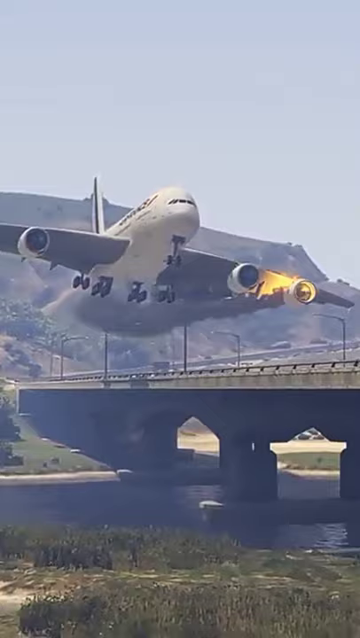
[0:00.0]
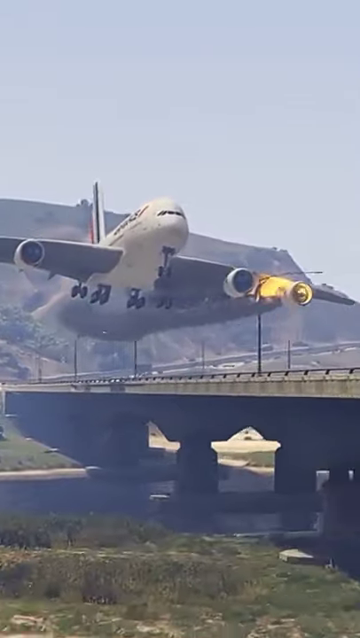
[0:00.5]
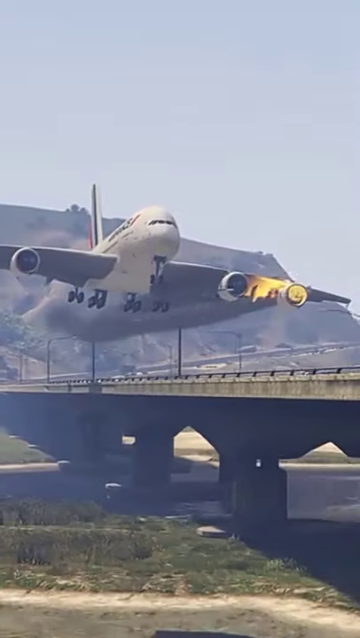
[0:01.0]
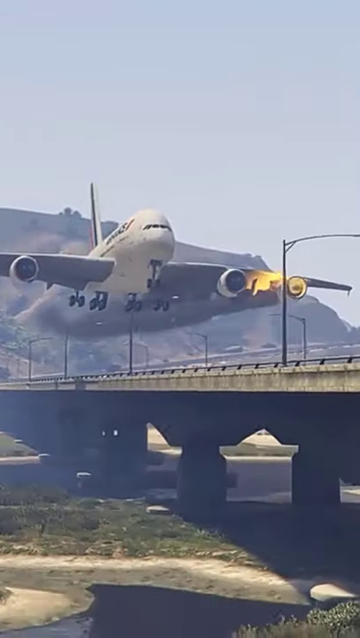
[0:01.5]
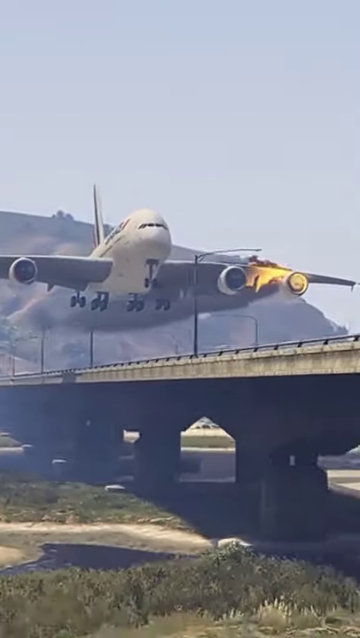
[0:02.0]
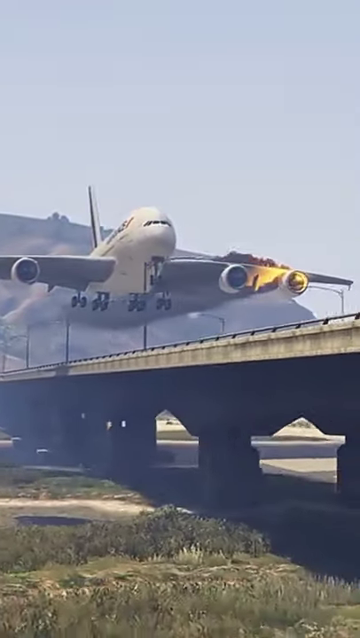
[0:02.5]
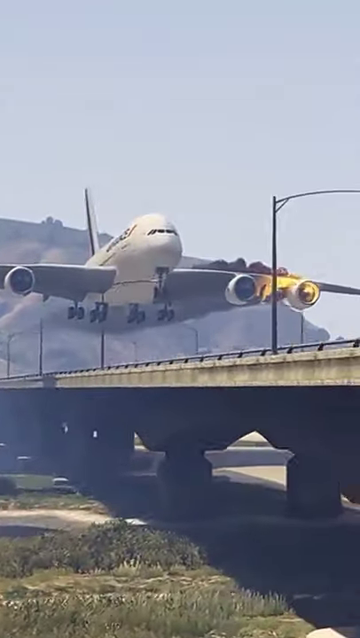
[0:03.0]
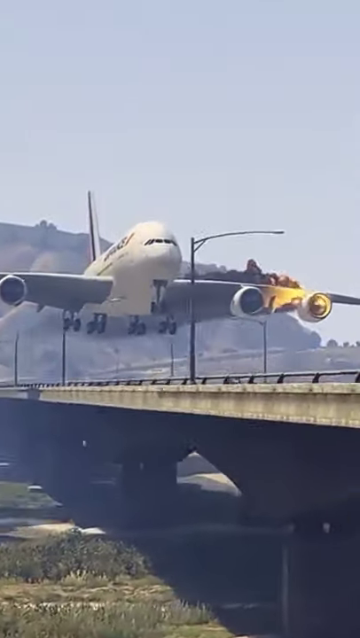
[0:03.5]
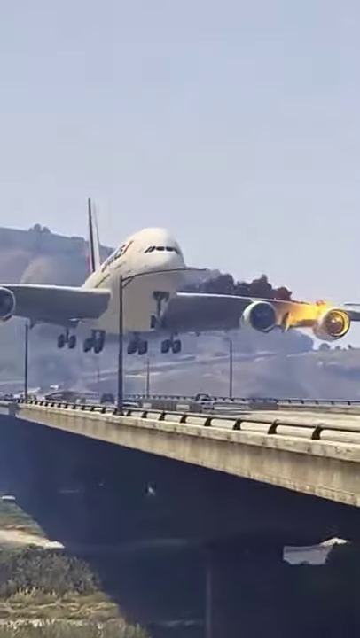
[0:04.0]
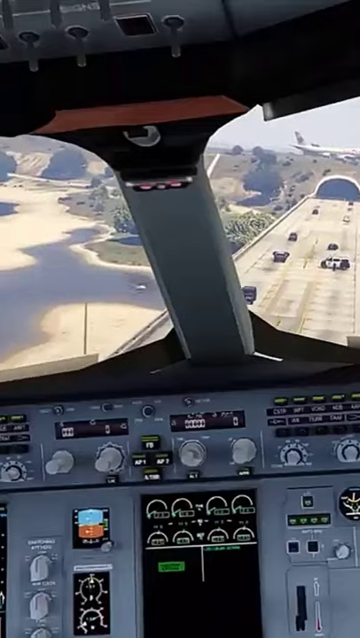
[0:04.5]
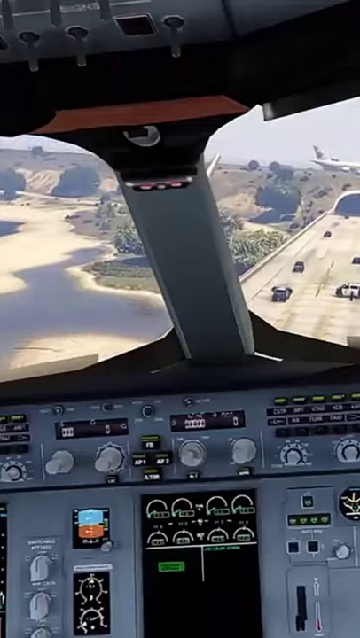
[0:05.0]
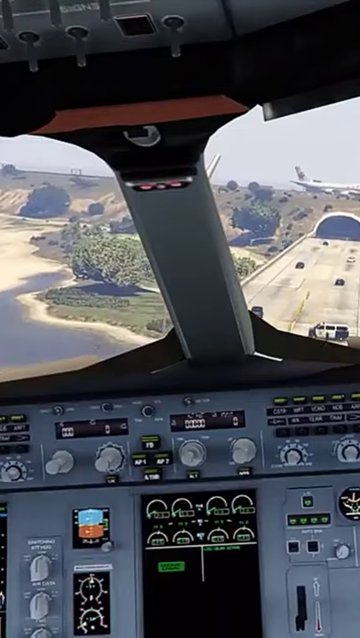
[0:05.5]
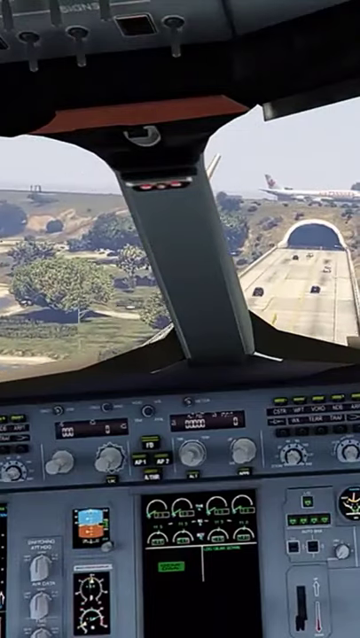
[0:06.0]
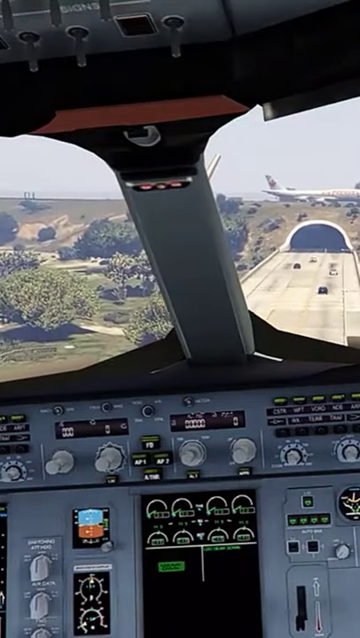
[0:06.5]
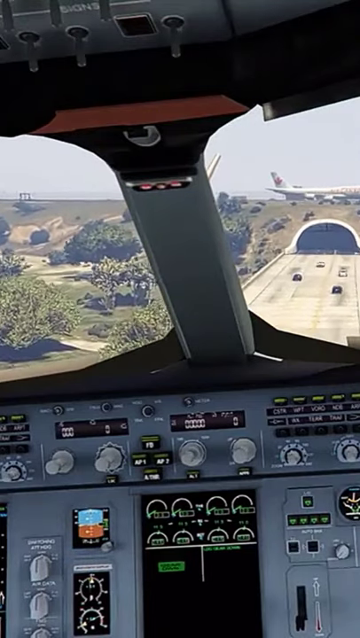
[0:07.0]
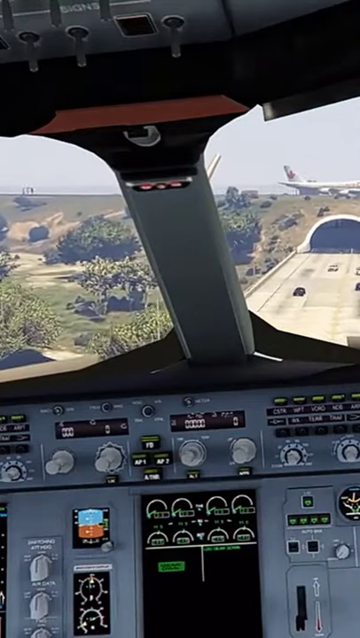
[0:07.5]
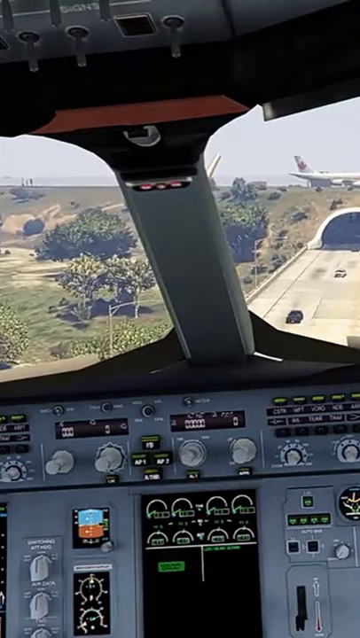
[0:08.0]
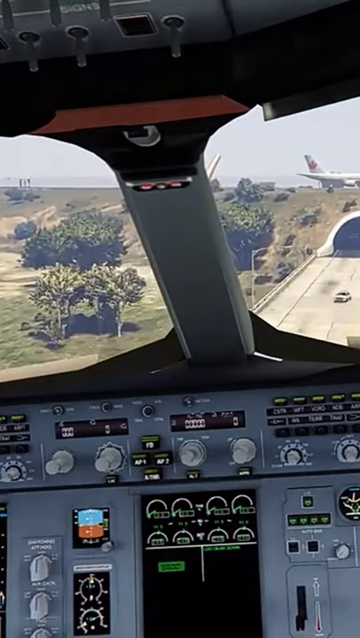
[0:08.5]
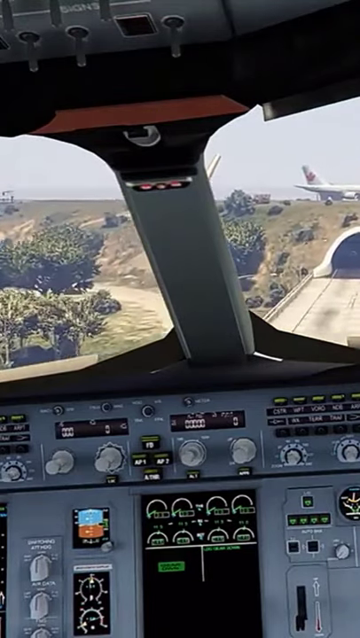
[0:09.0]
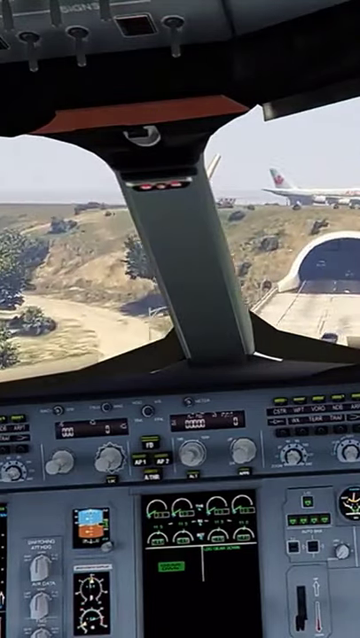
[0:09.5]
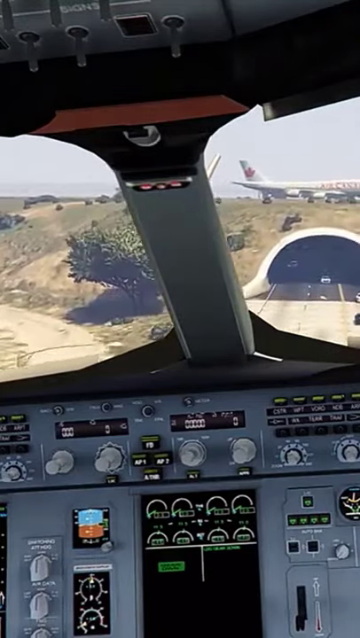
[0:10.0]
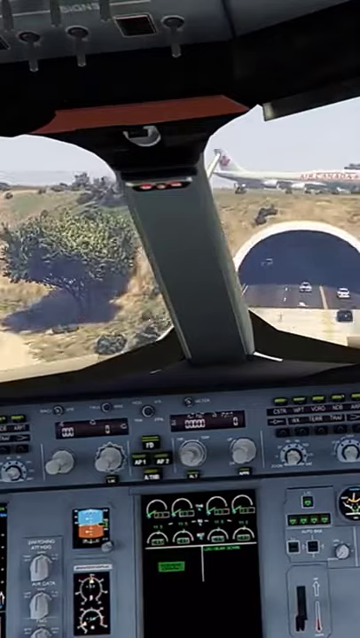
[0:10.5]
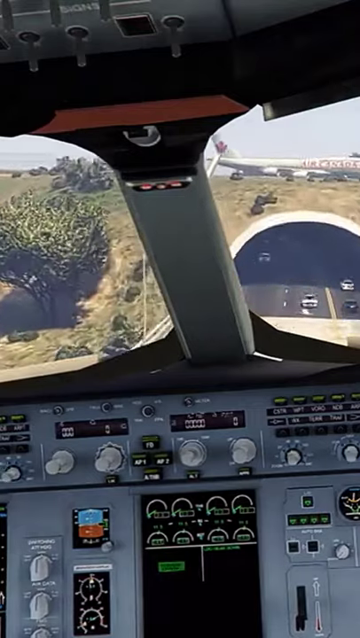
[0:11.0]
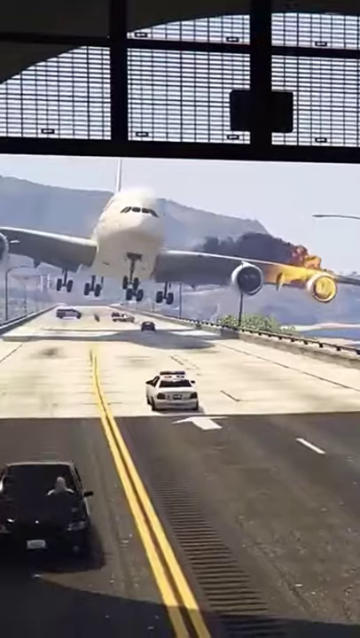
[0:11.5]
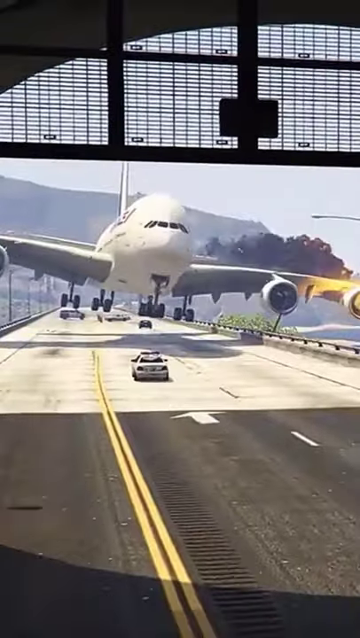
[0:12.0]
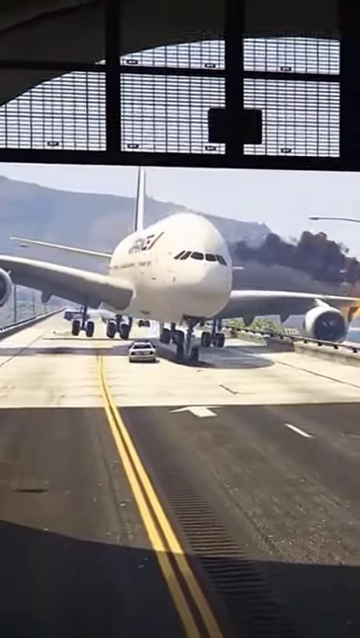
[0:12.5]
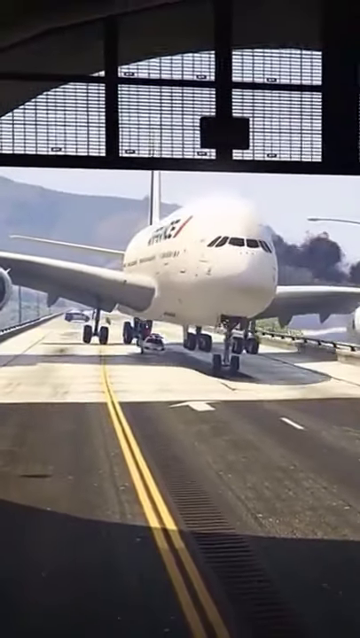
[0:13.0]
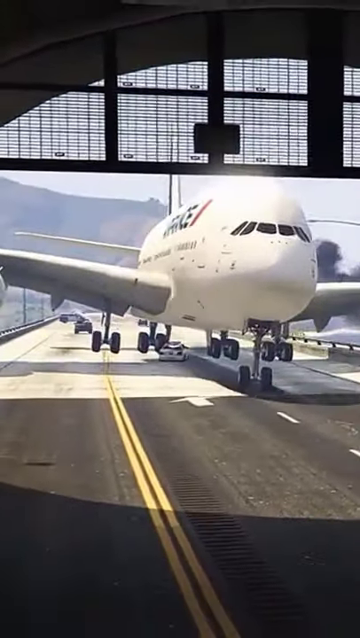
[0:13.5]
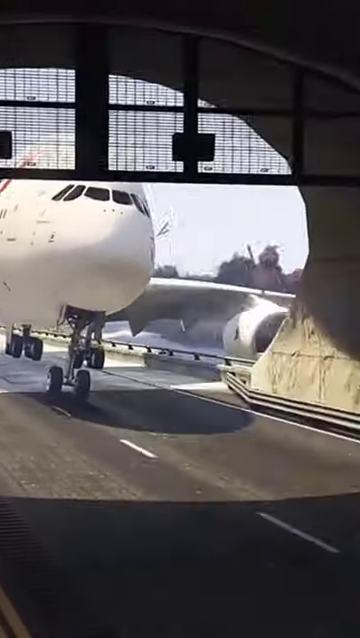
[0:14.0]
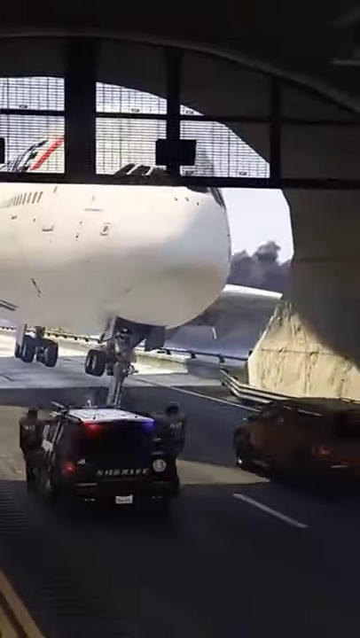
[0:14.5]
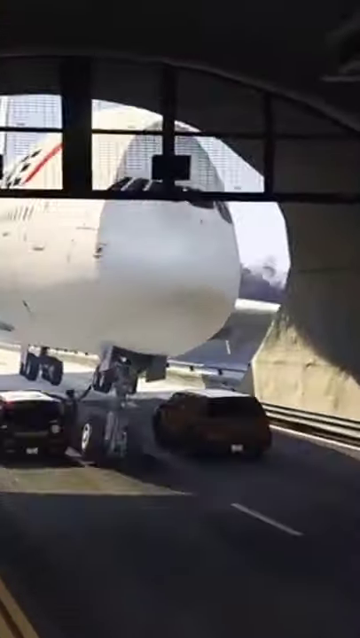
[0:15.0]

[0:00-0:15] A giant airplane, apparently with one of its wings on fire, is attempting to land with little room to do so. It tries to land on what looks like a very long bridge, slowly descending, and ends up crashing face first into the top bars of the closed-off end of a car tunnel. There is no explosion, and the plane itself does not explode; by the looks of it little damage is done. The cars that were coming toward the front have come to a stop, so they do not crash into the plane. The terrain is undamaged, and the characters in the car are undamaged. Little else is shown after the hard landing.